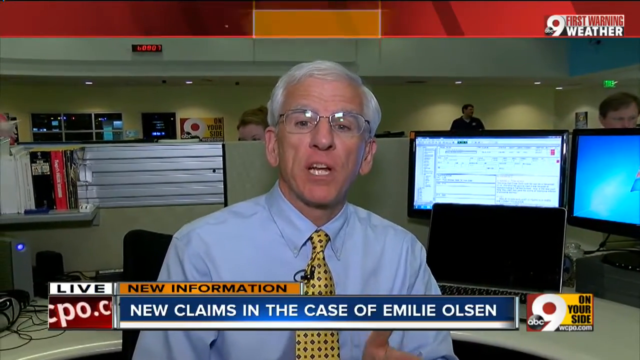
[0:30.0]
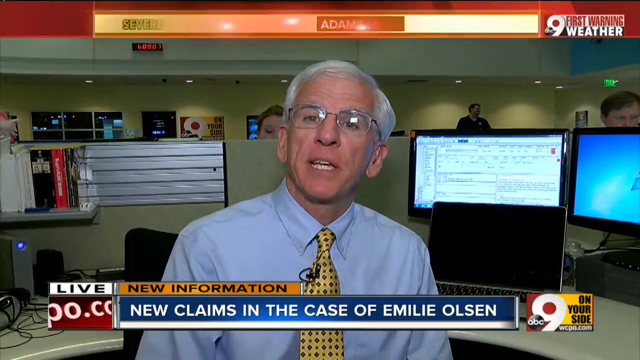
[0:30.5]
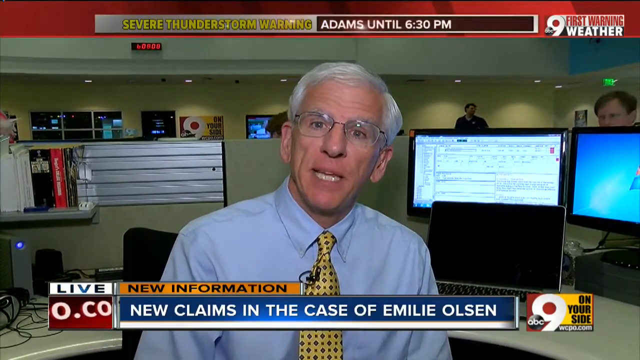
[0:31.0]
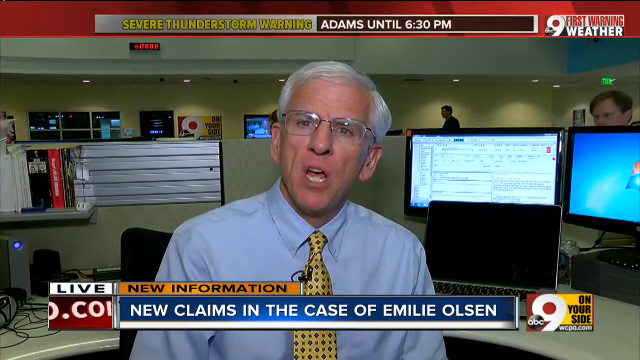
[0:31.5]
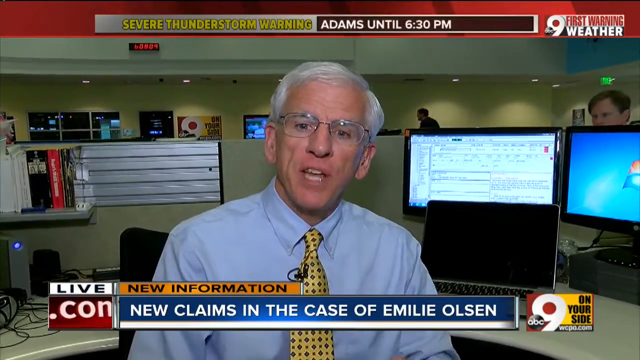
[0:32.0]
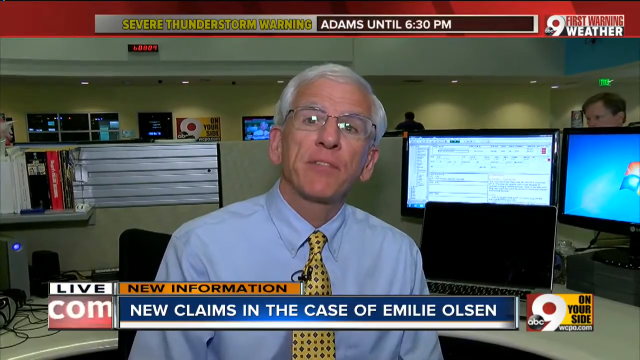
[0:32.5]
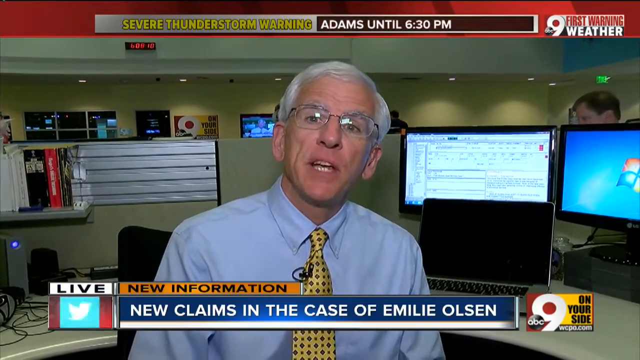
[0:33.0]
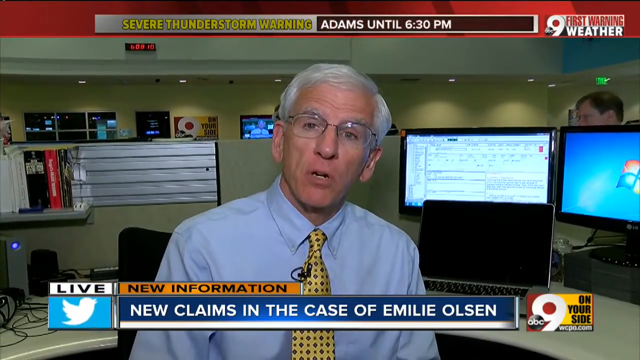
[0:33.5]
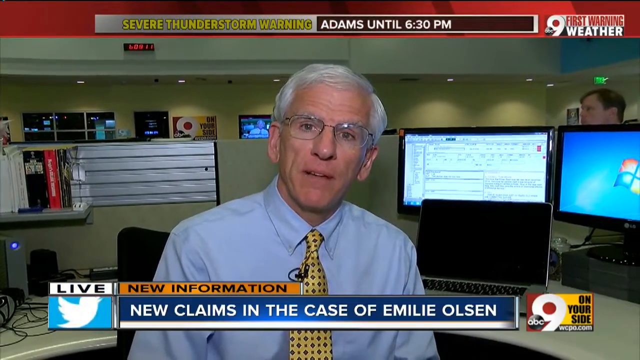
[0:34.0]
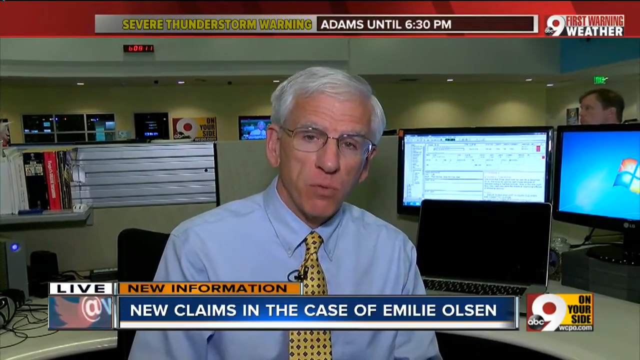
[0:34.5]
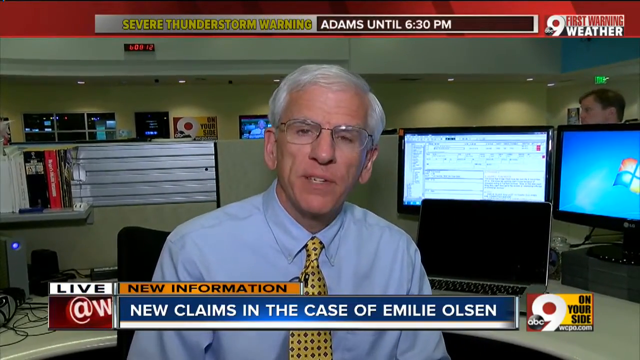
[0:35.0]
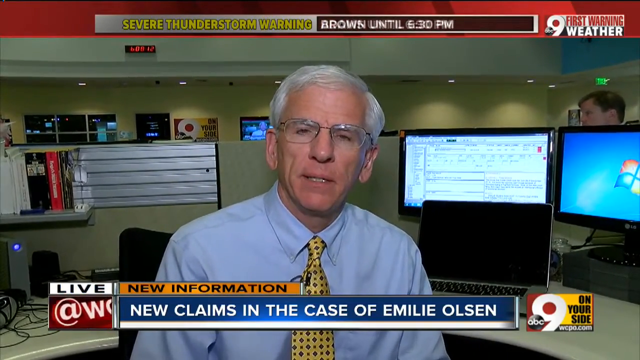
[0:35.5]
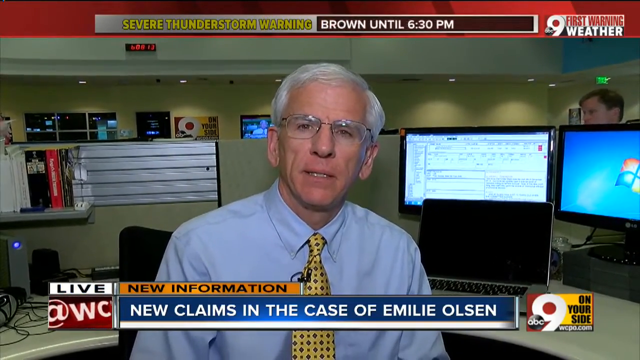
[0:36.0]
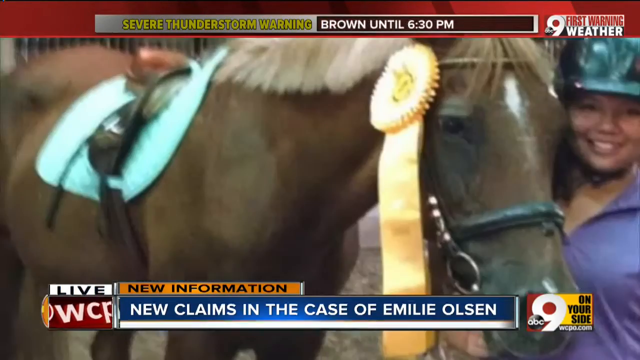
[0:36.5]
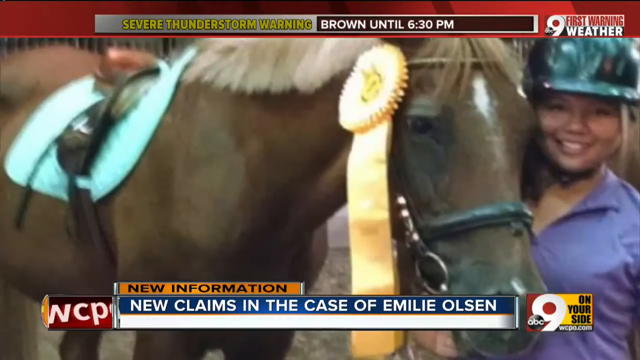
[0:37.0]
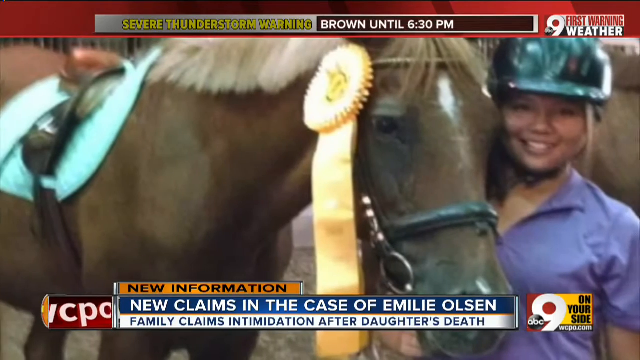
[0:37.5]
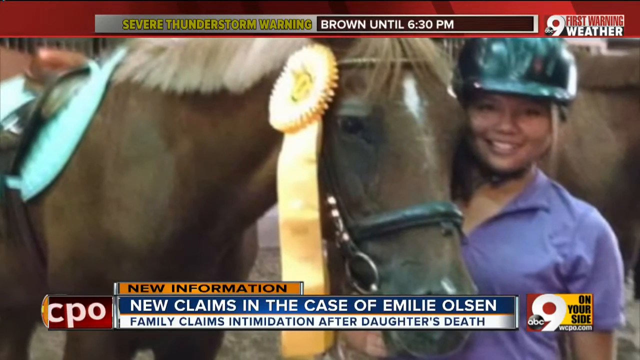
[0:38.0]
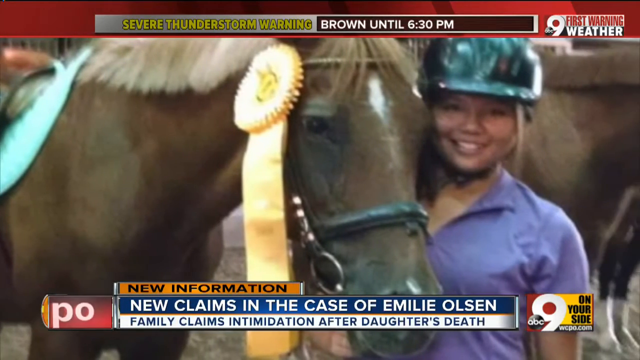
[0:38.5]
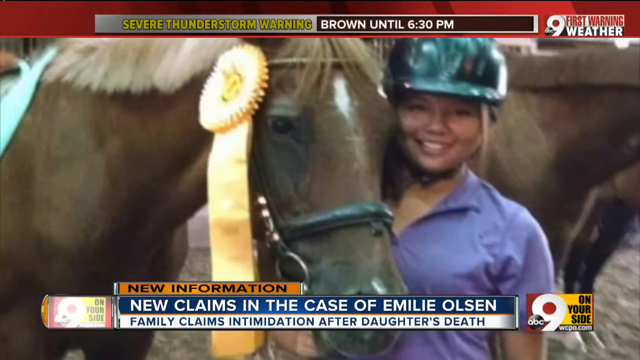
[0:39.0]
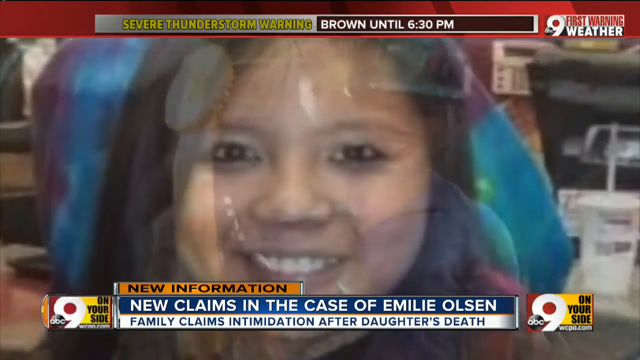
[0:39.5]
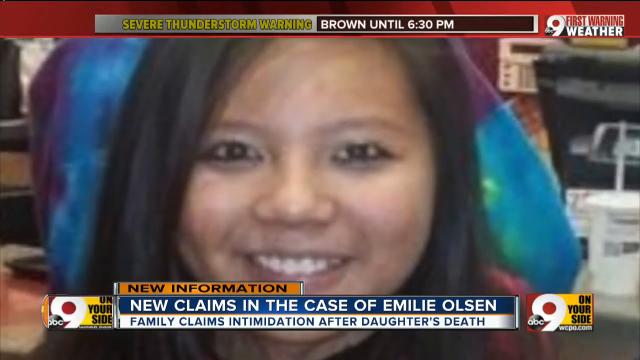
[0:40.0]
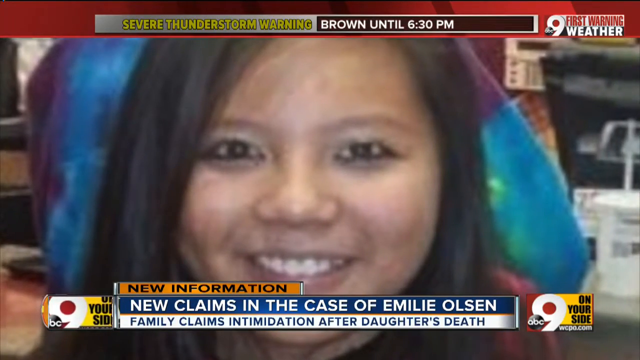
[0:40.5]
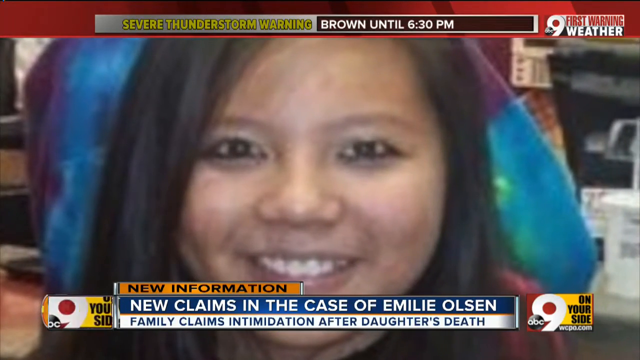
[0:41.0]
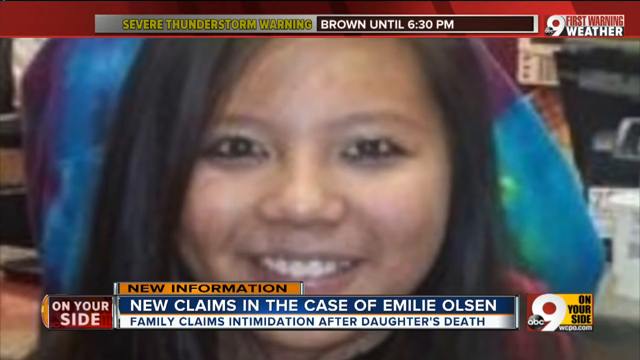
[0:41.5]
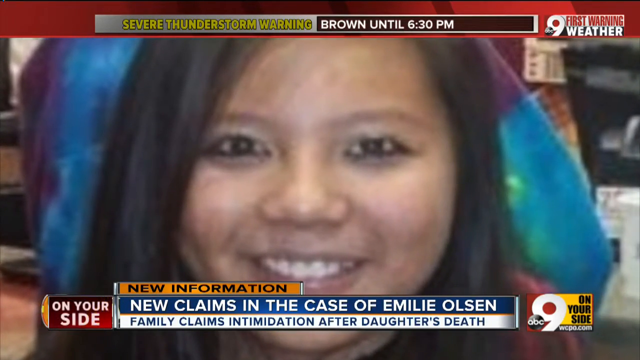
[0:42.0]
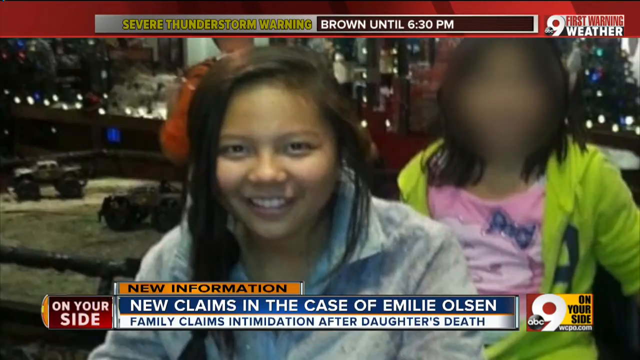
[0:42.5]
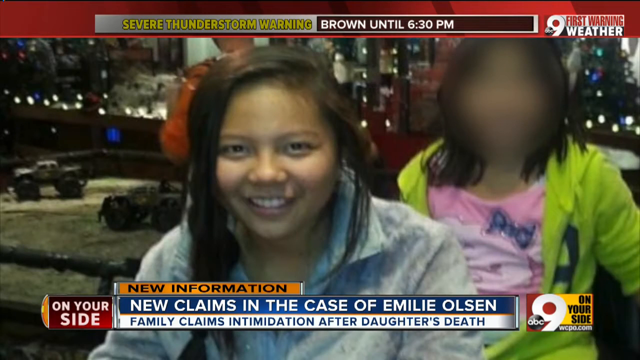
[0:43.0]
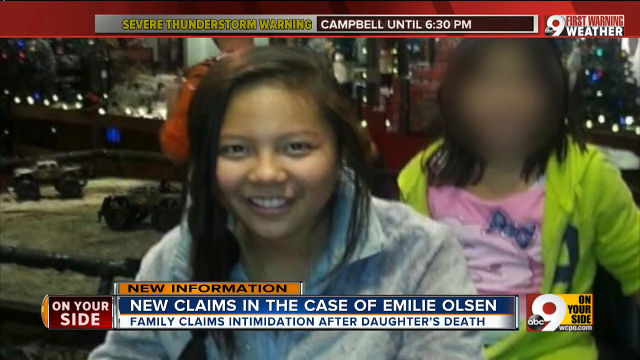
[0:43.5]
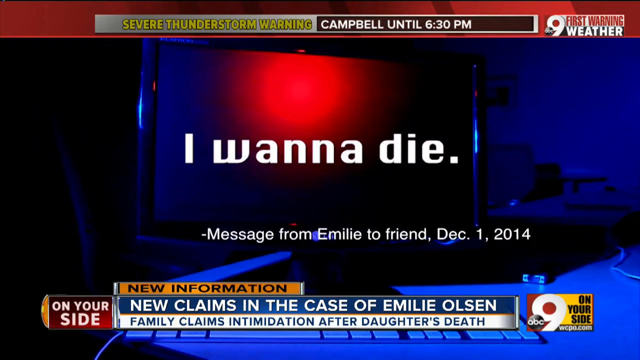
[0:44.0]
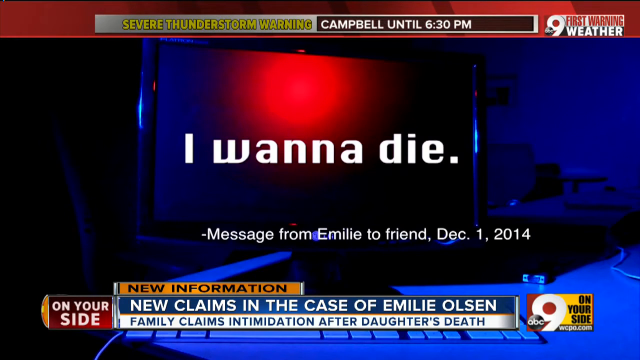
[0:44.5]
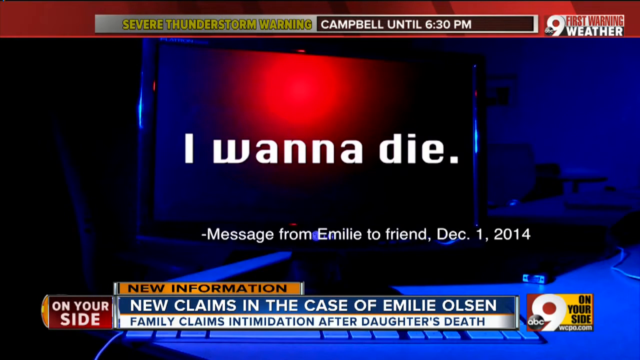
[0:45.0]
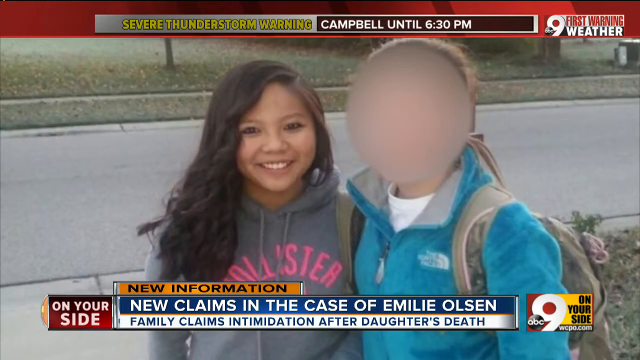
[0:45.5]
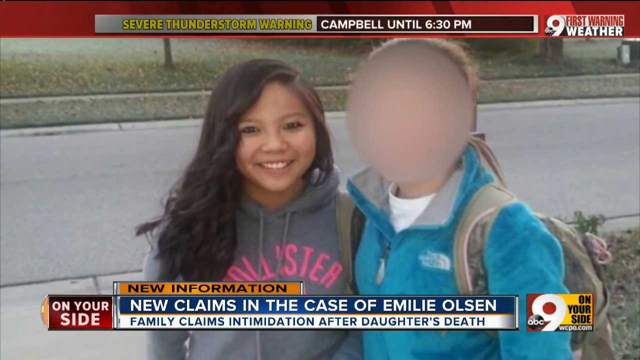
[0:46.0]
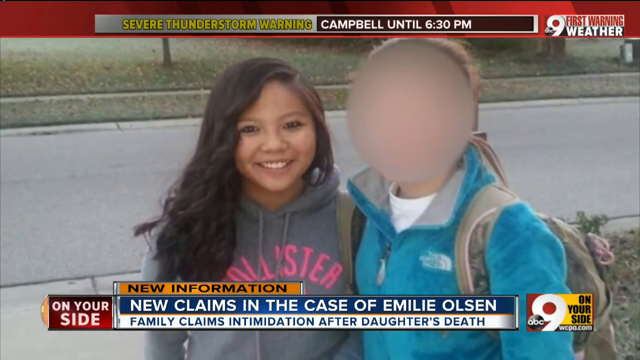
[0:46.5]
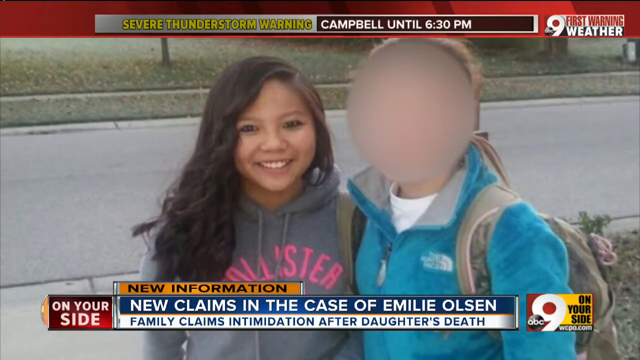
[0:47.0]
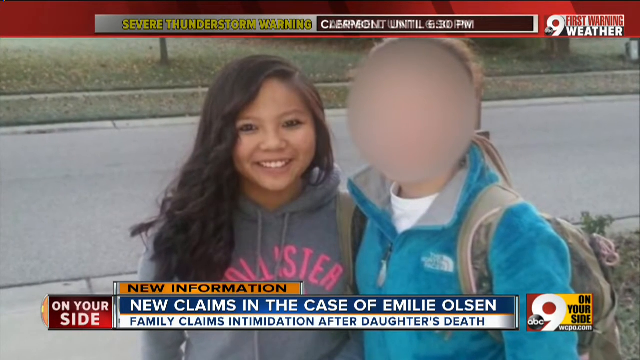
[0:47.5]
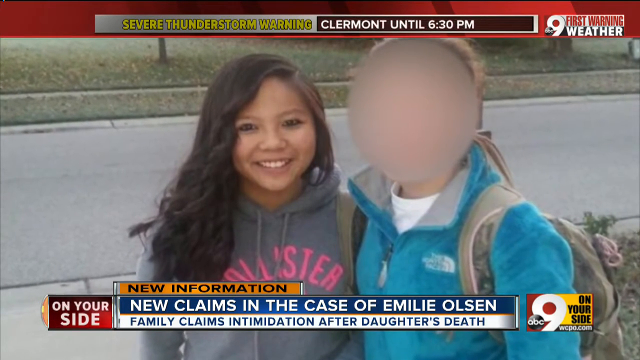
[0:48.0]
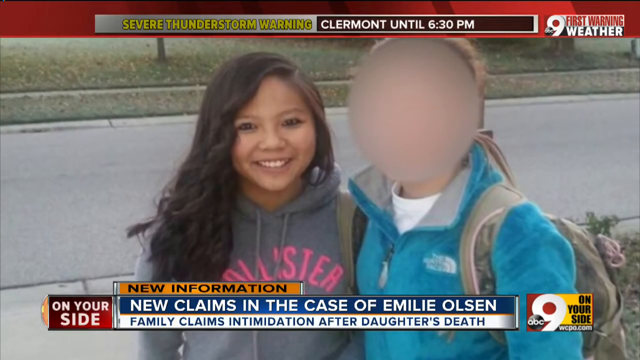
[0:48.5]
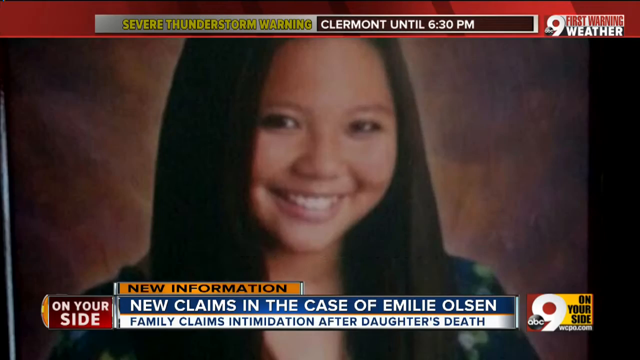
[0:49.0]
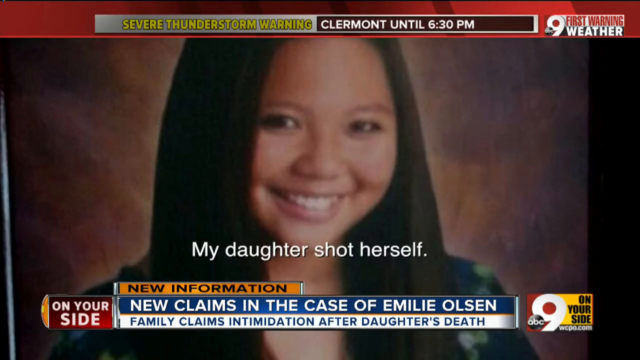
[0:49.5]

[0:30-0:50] The man in the blue shirt, with gray hair, glasses, visible teeth and a gold tie, continues to appear in a news format. "First warning weather" is in the top right with an indication that it is live, and a Twitter icon appears in the top left or bottom left. The video transitions to a woman with black hair and kind of brownish skin next to a horse, wearing a green shirt and purple shirt. Another screen then shows a close-up of her face, with a footer reading "new claims in the case of Emily Olsen family claims intimidation after daughter's death". One last screen shows her.